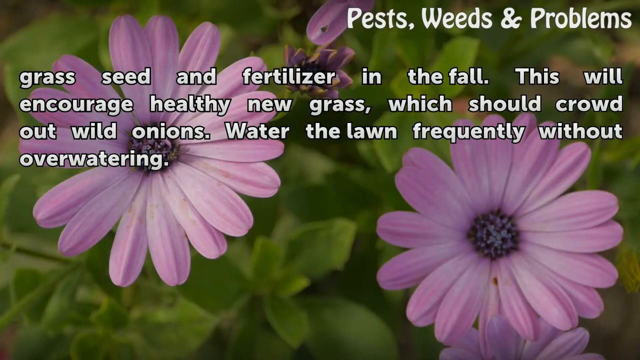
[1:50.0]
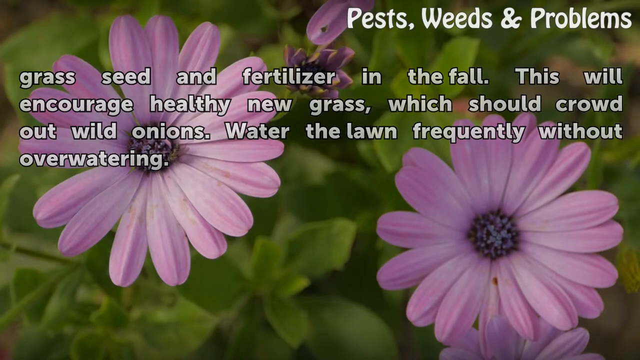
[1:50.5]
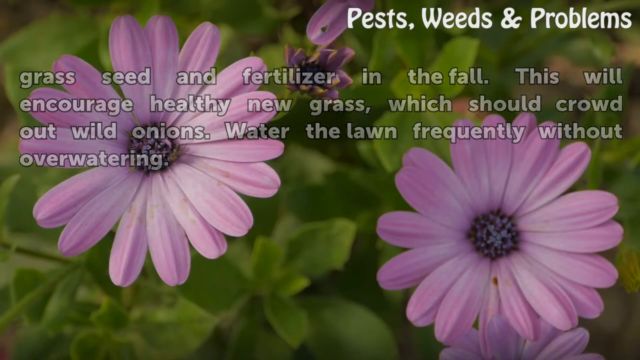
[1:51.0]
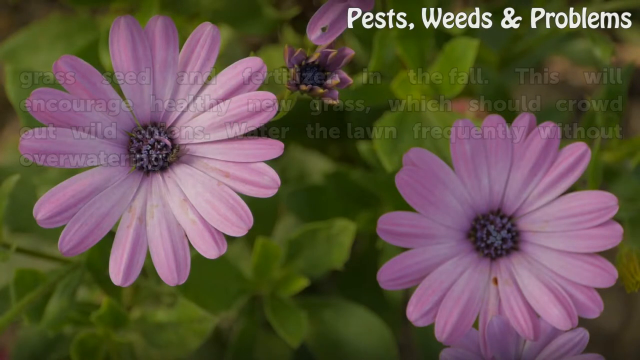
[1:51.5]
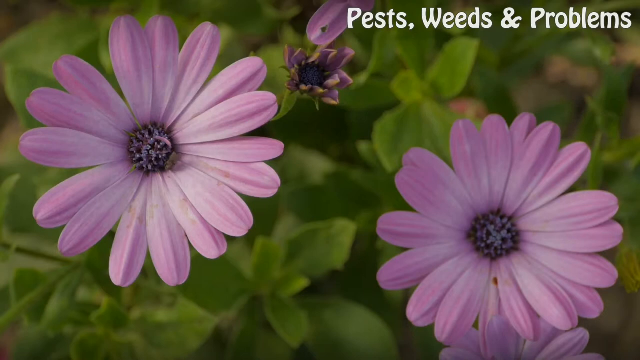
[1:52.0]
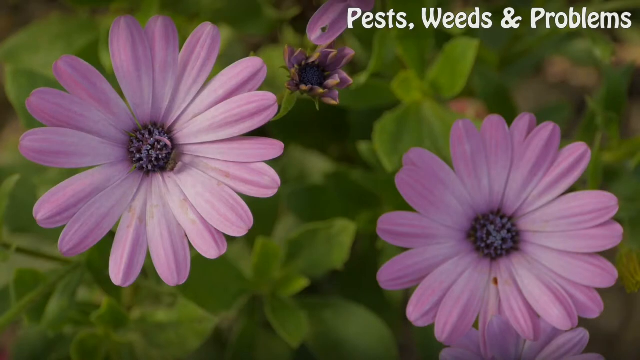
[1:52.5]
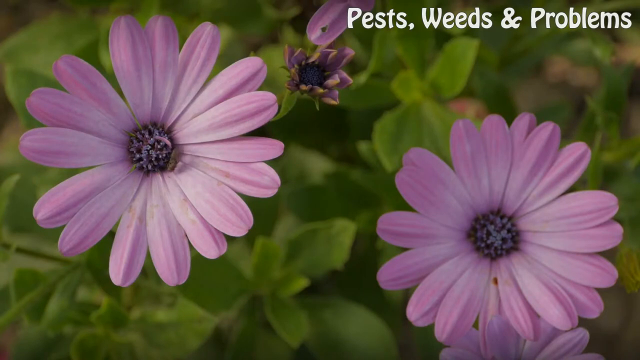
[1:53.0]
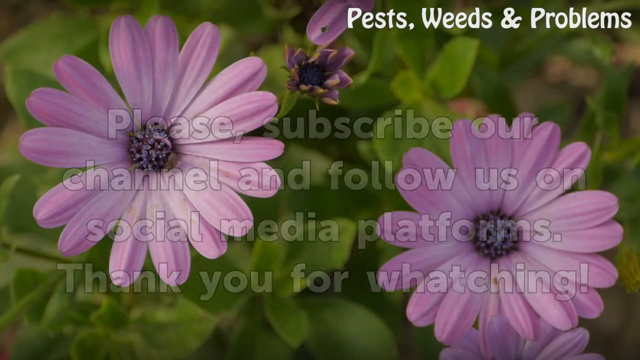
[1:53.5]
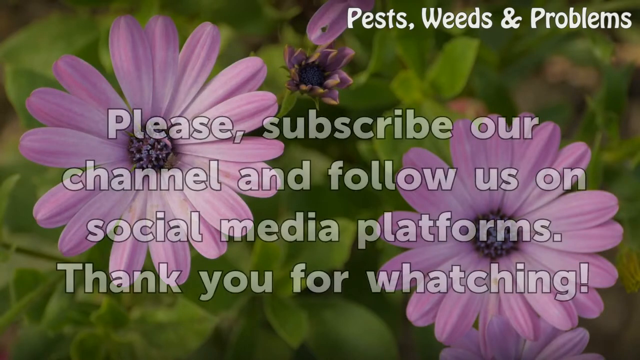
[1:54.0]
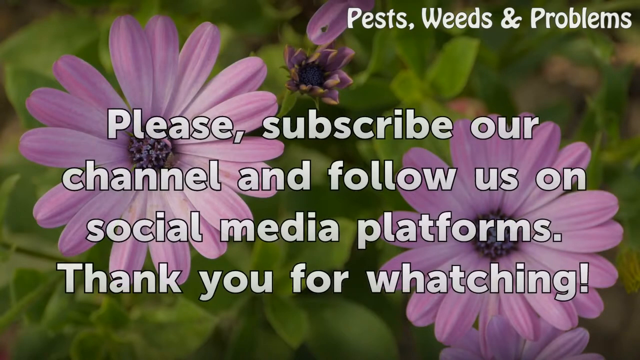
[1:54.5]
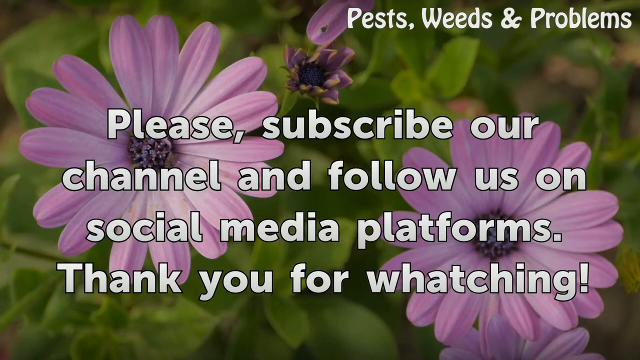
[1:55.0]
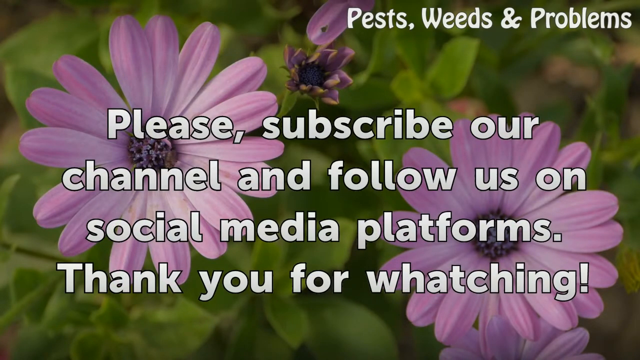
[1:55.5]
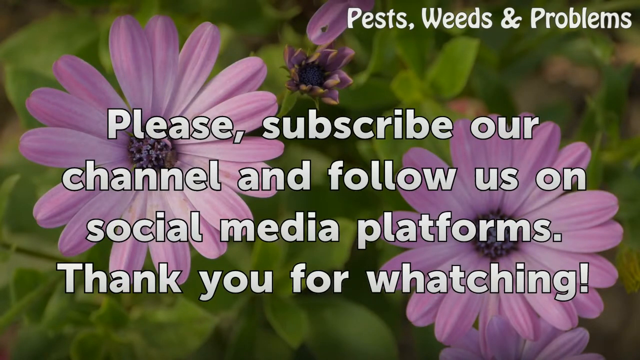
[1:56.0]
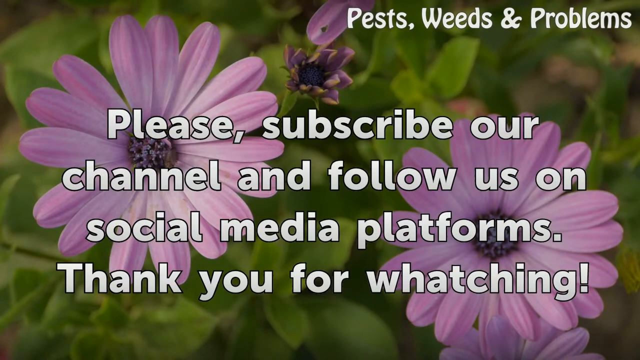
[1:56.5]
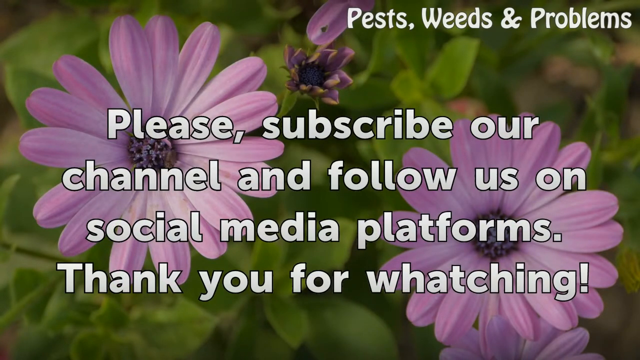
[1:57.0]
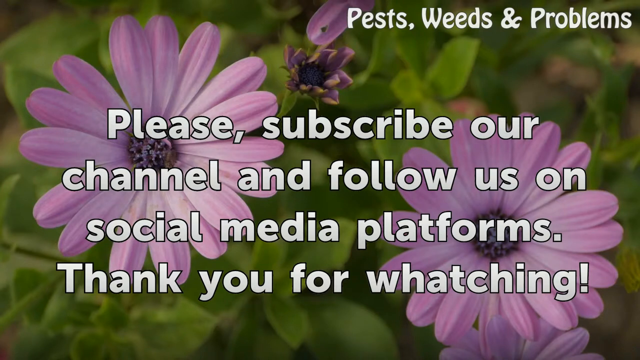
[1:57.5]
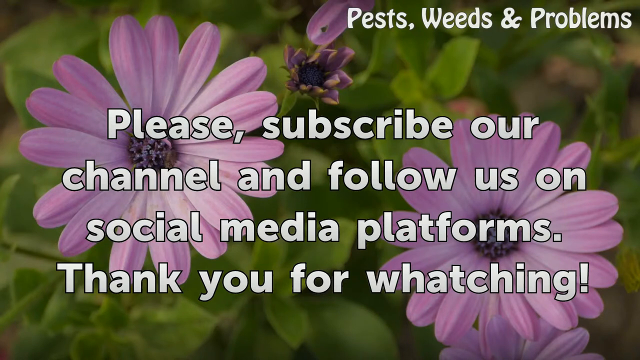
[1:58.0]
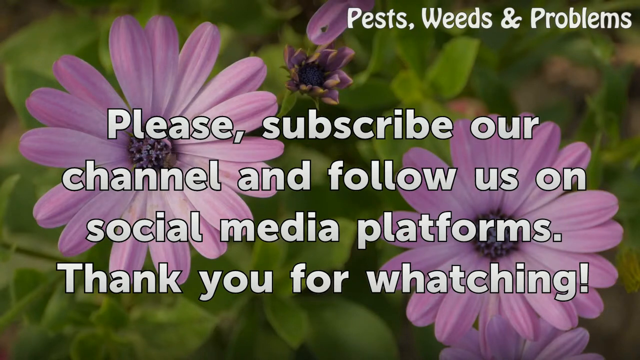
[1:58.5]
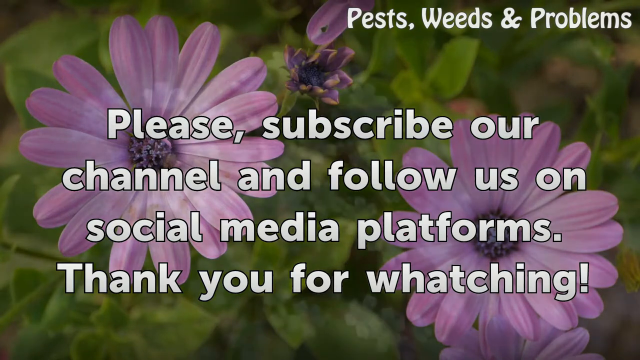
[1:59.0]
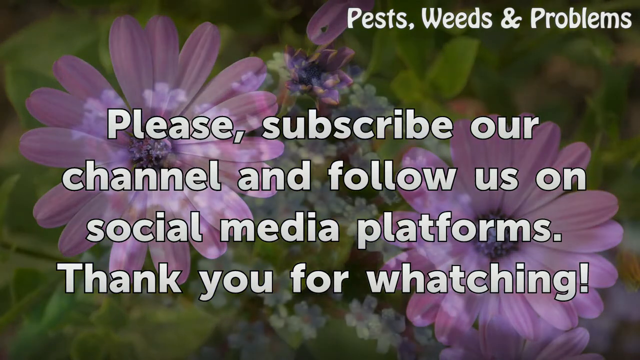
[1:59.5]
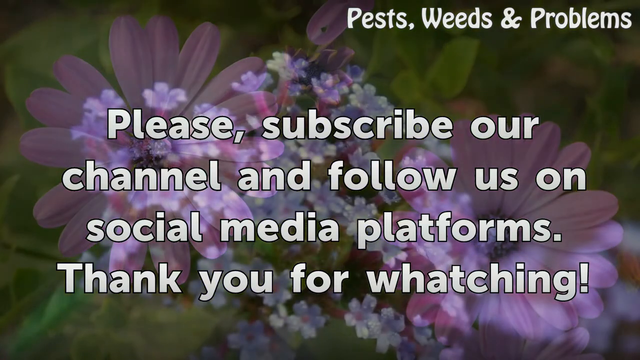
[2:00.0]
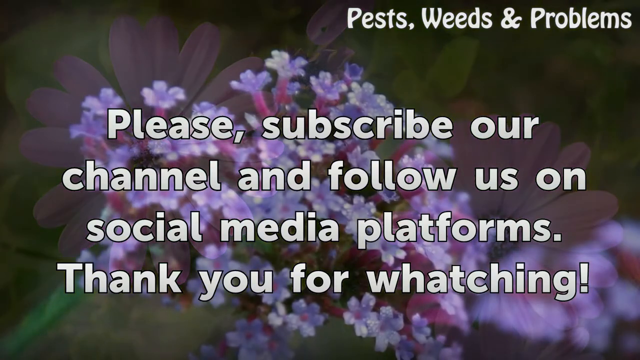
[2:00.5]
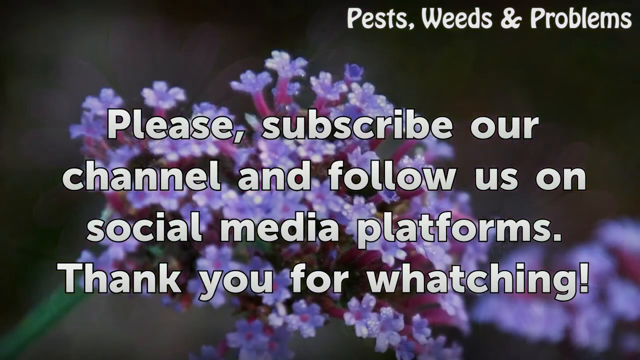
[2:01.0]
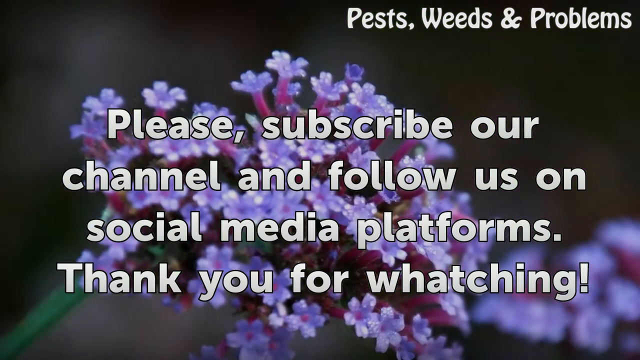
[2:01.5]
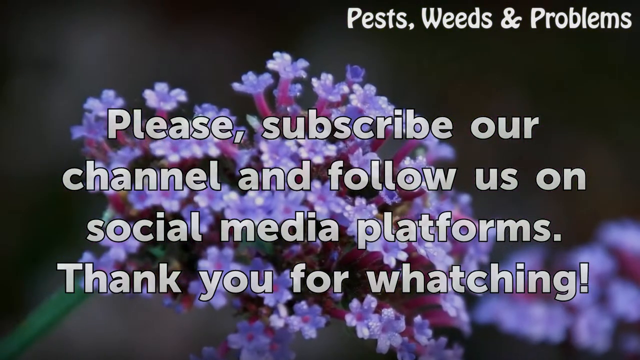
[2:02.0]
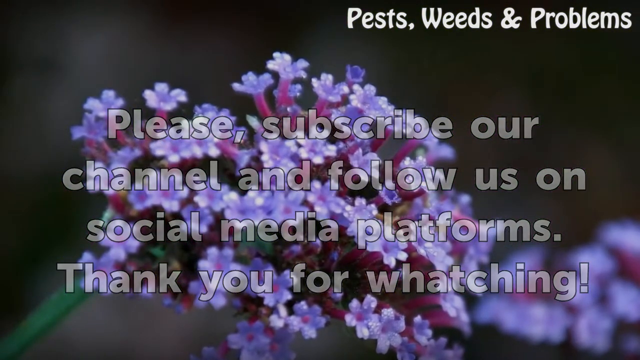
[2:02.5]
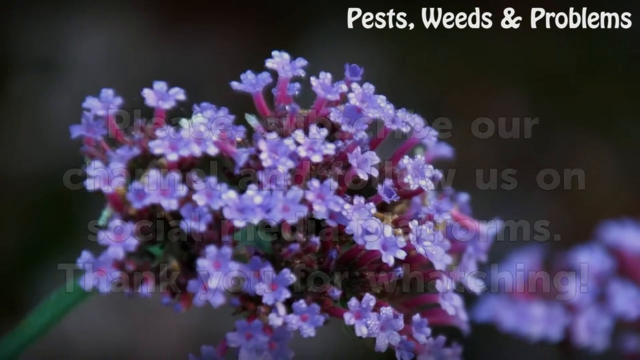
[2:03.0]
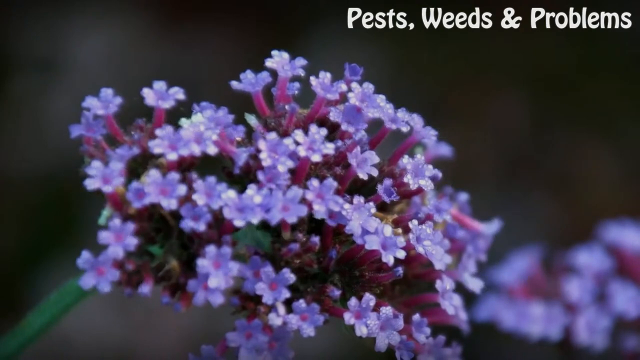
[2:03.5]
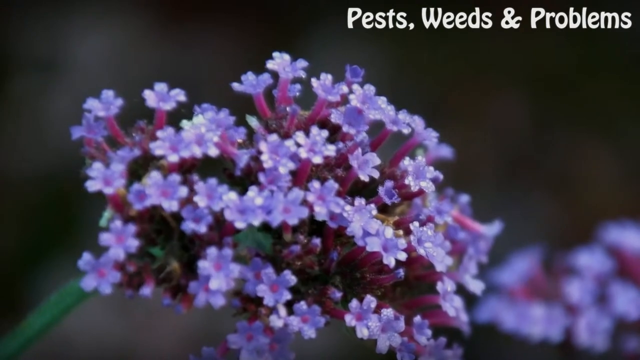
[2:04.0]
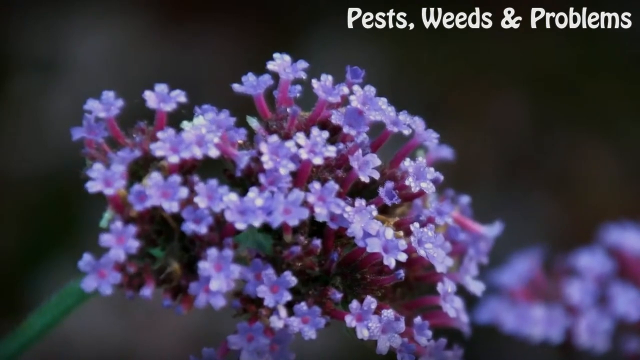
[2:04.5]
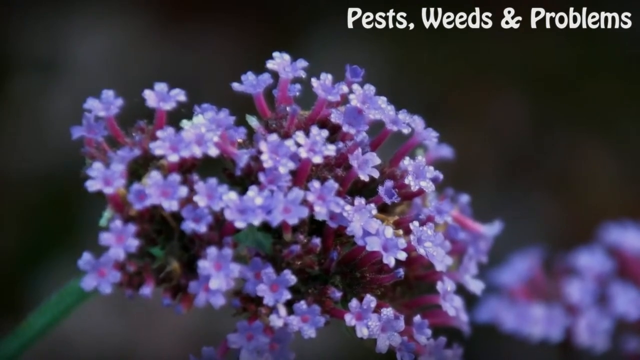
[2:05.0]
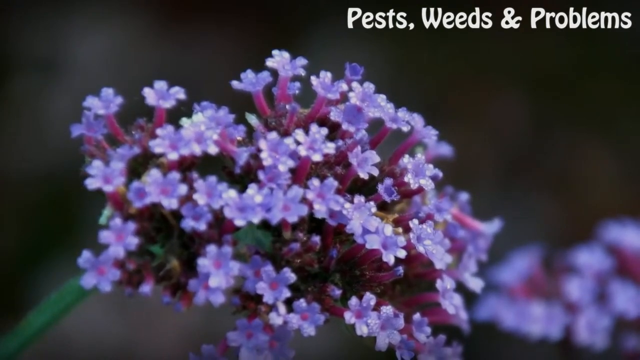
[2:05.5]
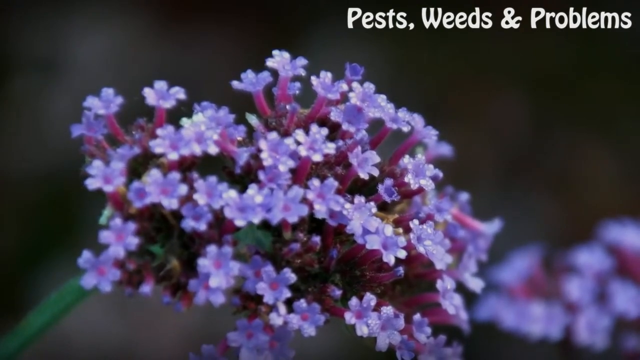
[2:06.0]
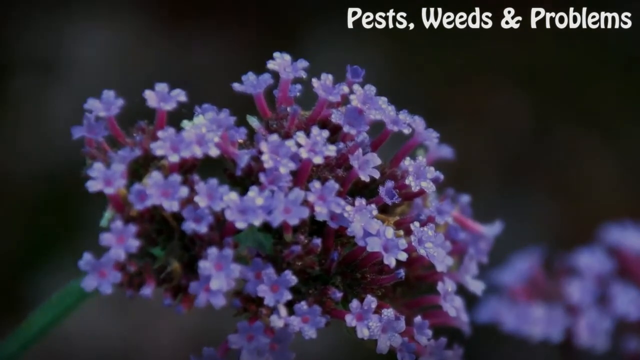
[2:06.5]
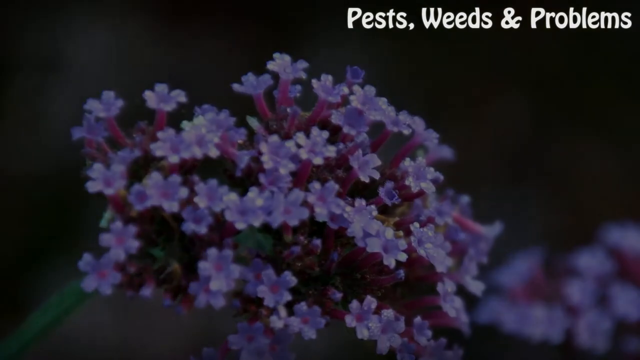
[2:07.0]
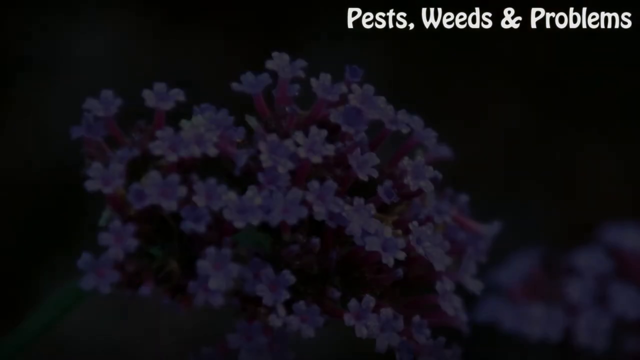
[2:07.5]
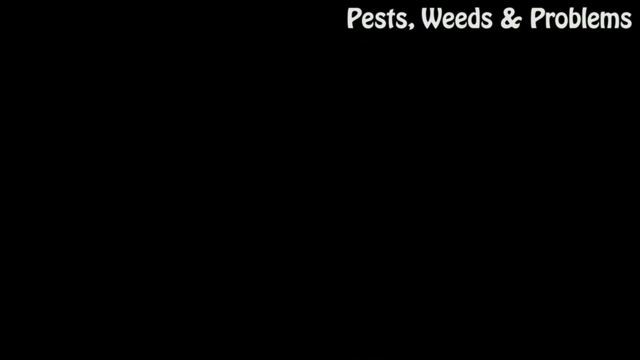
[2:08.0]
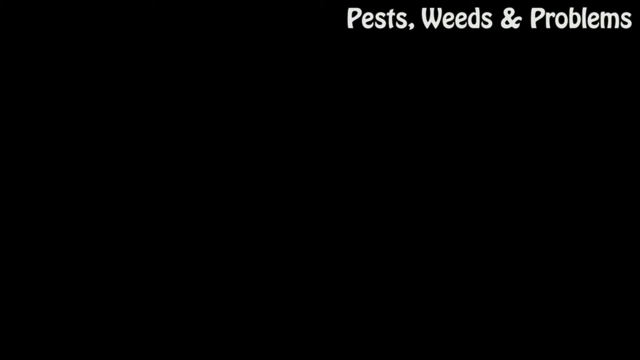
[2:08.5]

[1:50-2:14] The picture of the two purple flowers remains for some seconds with the last part of the instructions for getting rid of weeds in normal lawns. The text then slowly fades away, leaving only the purple flowers for a couple of seconds before white text appears reading "Please subscribe our channel and follow us on social media platforms. Thank you for watching." The text stays for two to three seconds, and before it disappears, the flowers in the background change to a different, smaller purple flower. The text then slowly fades away, leaving only the flowers for a couple of seconds before the screen fades to black.